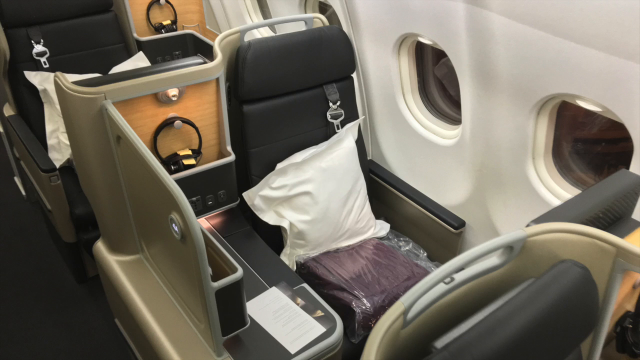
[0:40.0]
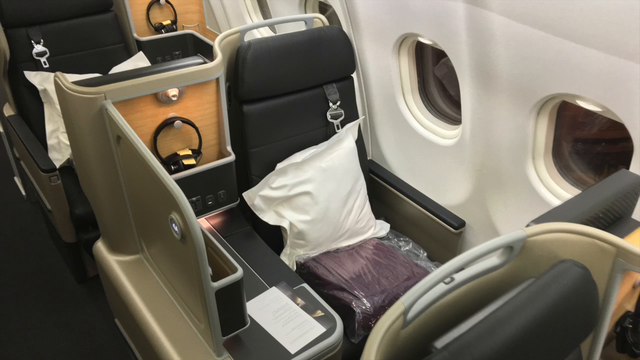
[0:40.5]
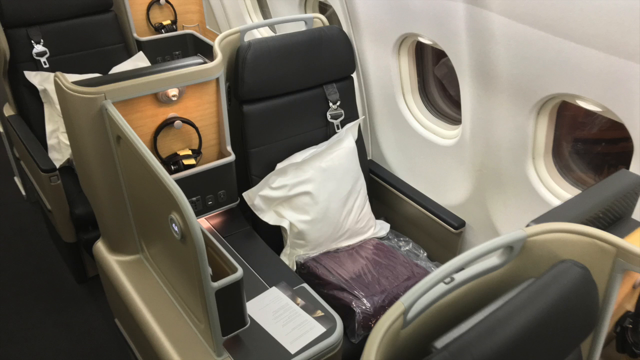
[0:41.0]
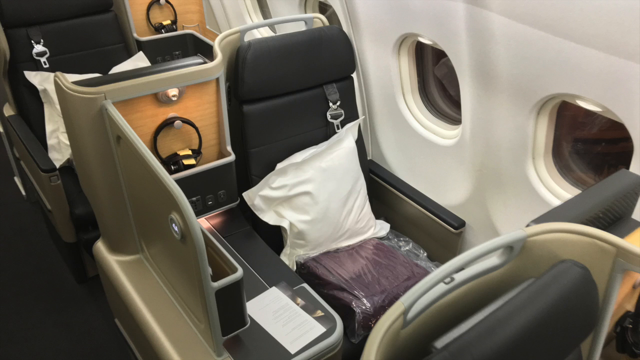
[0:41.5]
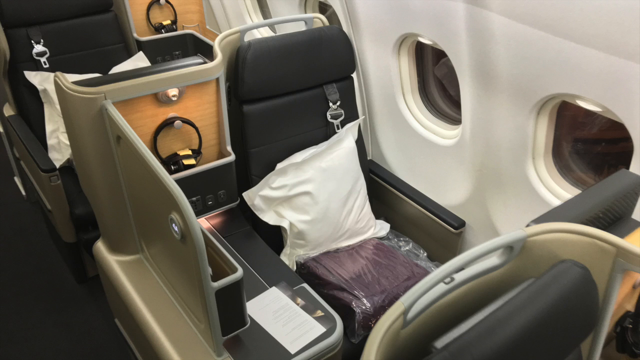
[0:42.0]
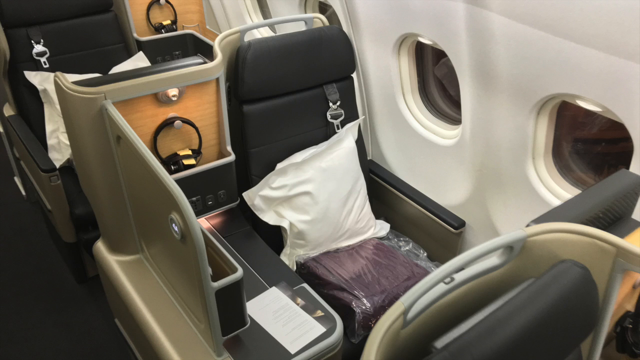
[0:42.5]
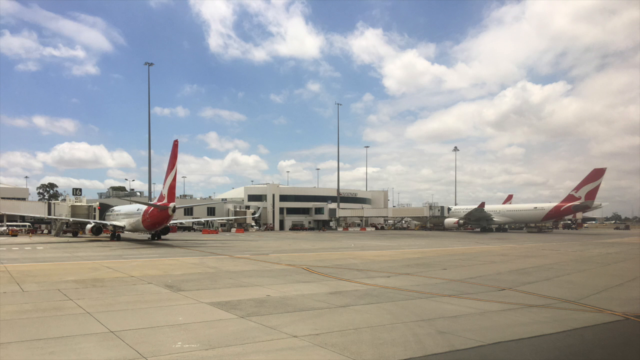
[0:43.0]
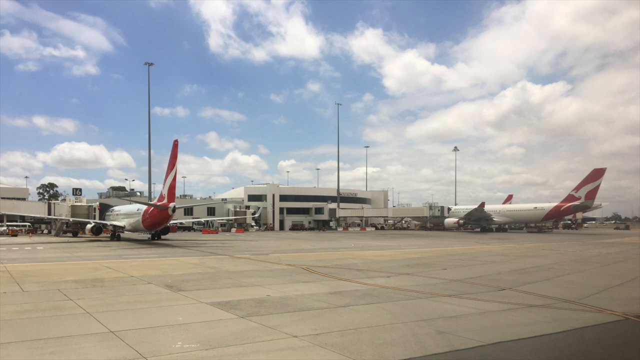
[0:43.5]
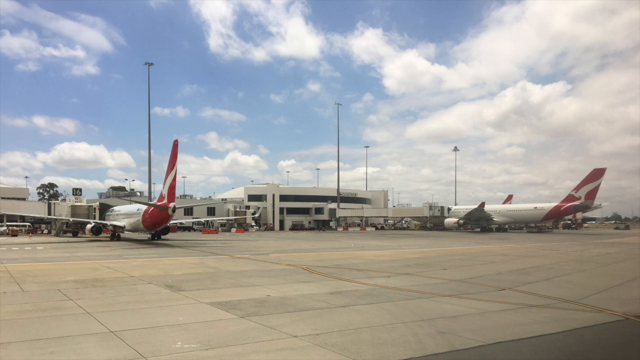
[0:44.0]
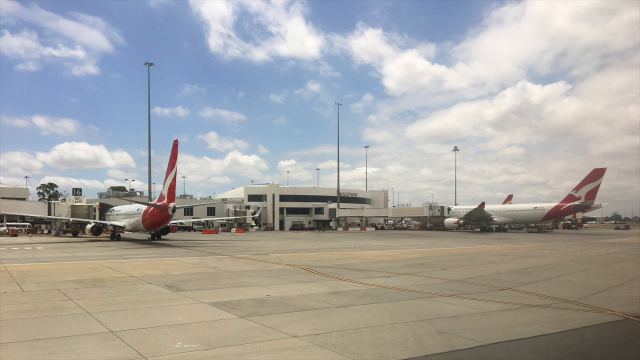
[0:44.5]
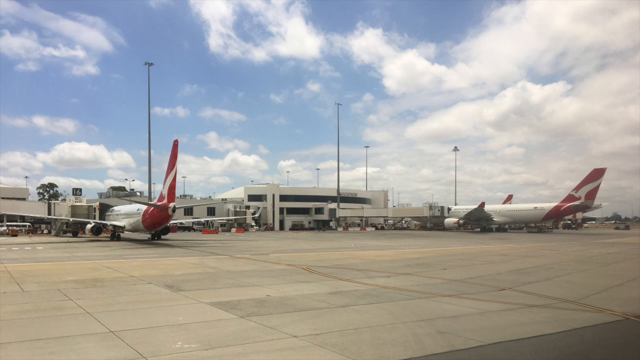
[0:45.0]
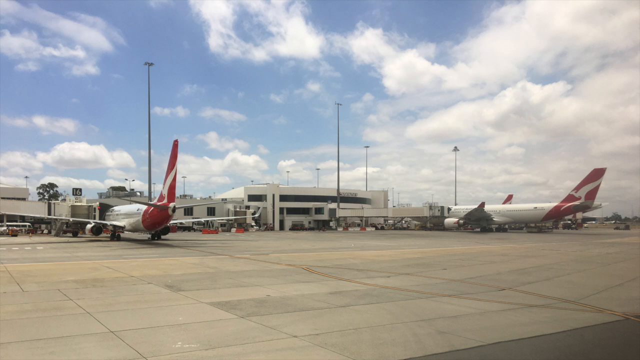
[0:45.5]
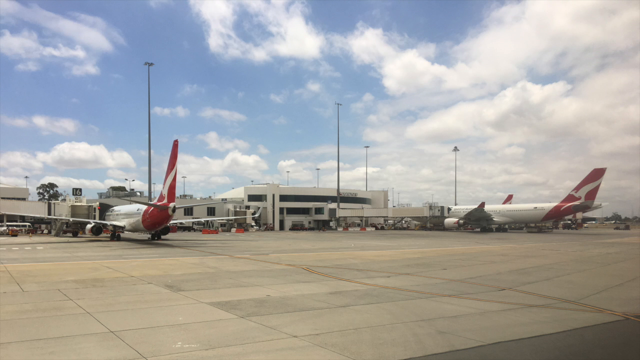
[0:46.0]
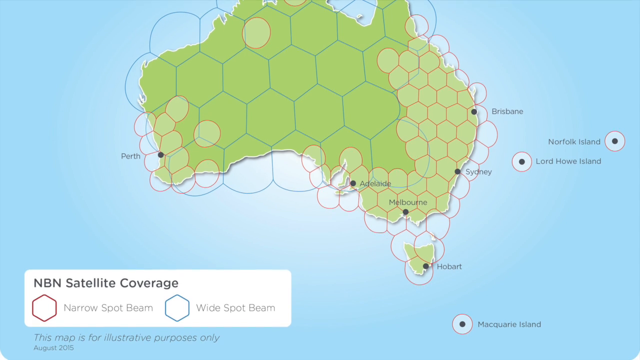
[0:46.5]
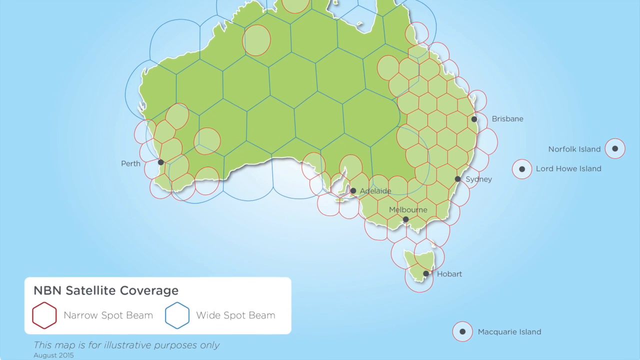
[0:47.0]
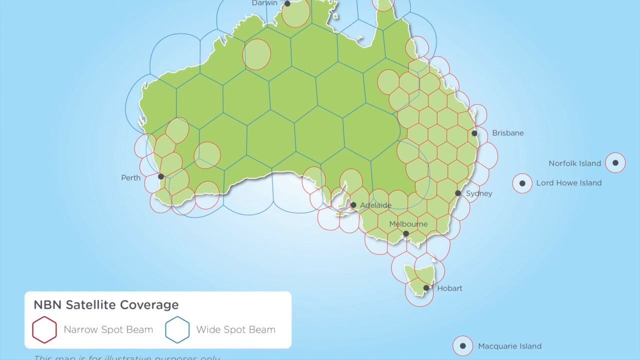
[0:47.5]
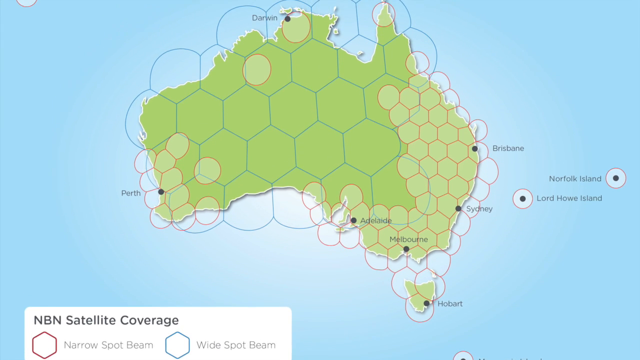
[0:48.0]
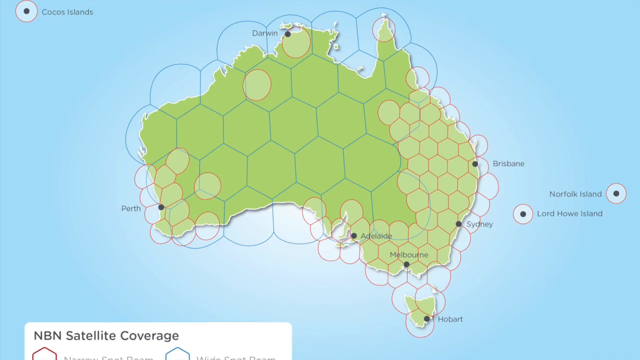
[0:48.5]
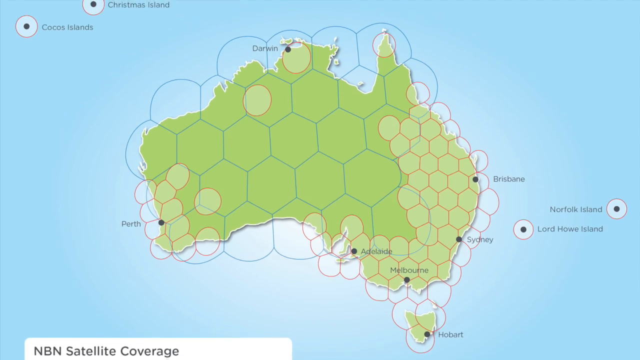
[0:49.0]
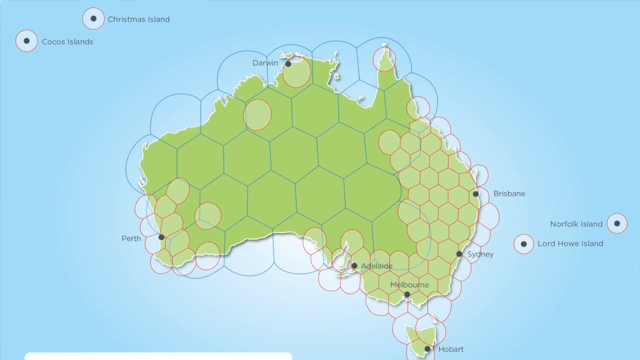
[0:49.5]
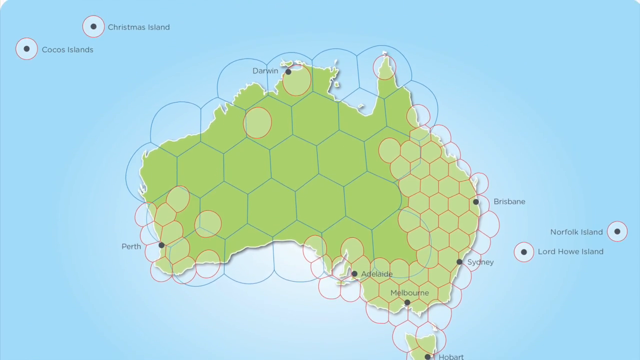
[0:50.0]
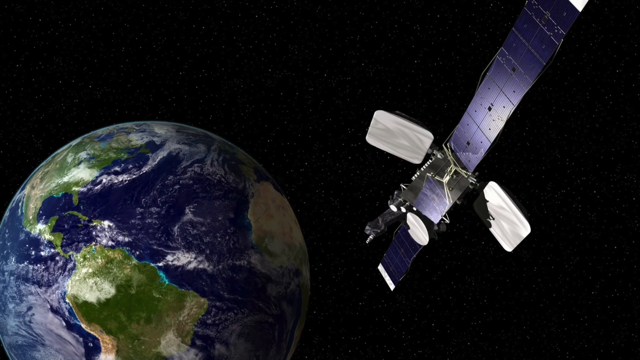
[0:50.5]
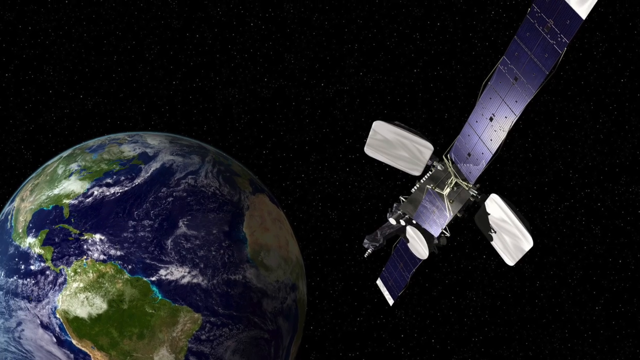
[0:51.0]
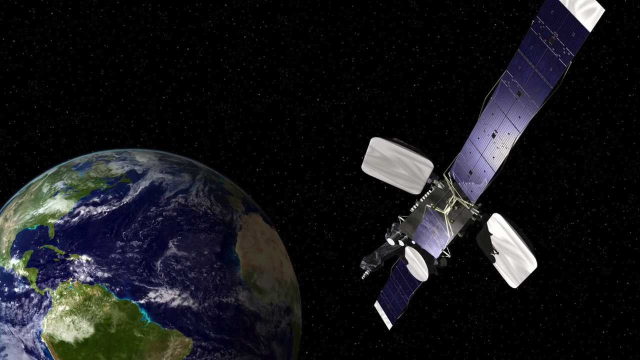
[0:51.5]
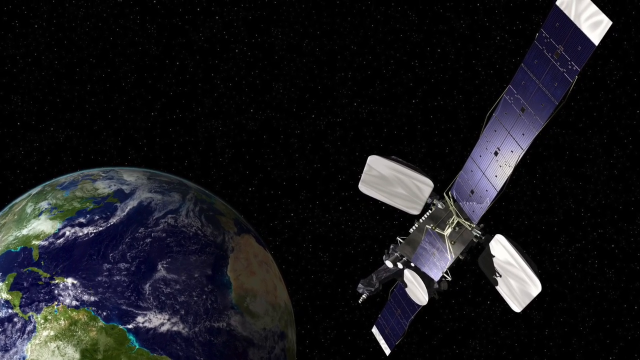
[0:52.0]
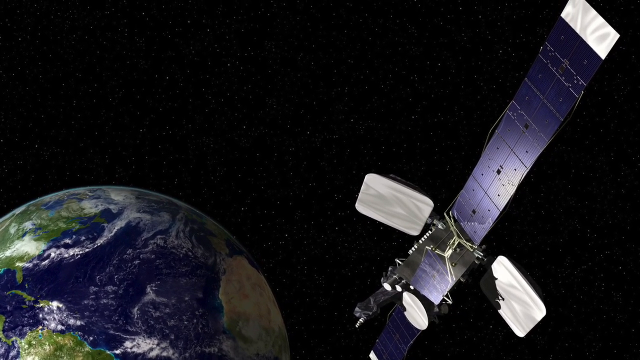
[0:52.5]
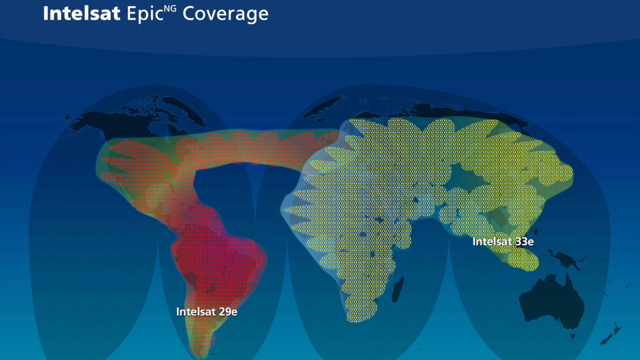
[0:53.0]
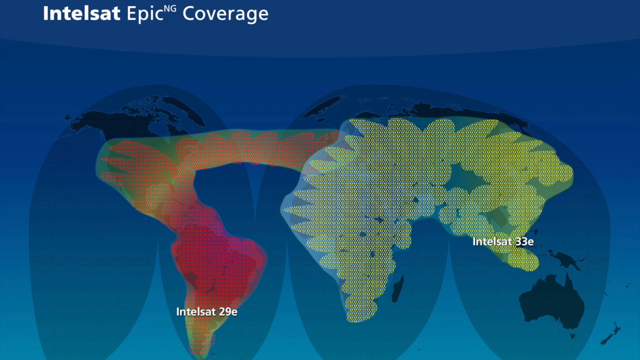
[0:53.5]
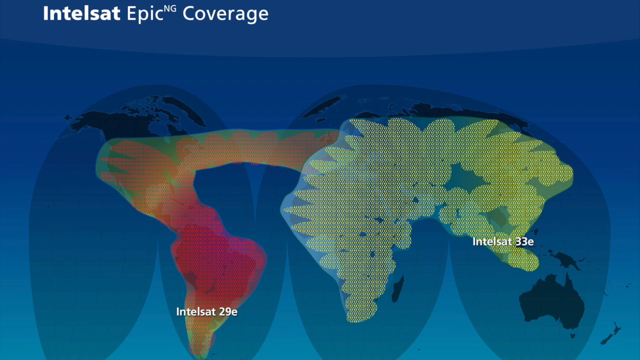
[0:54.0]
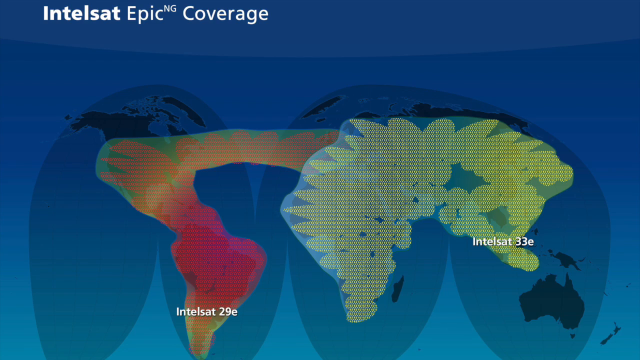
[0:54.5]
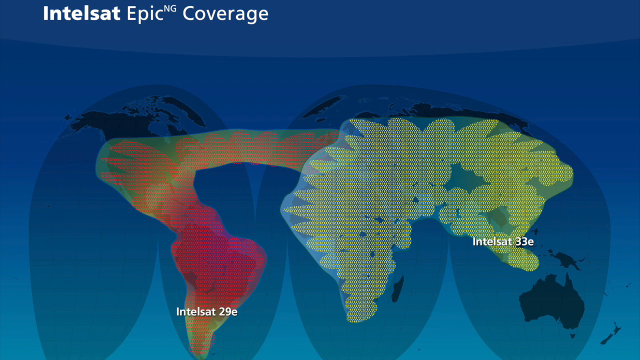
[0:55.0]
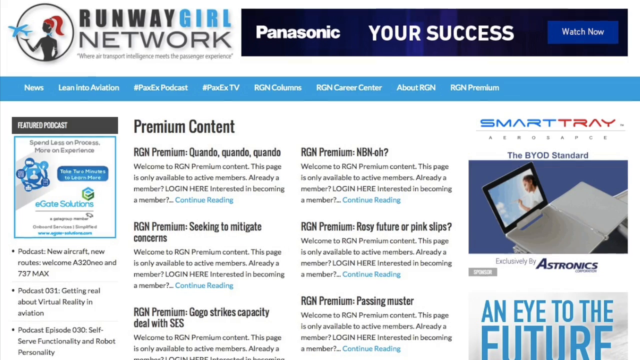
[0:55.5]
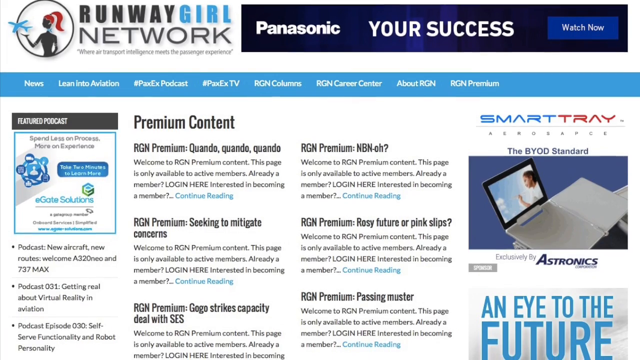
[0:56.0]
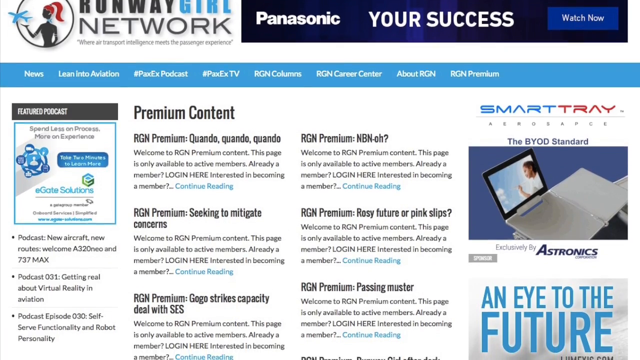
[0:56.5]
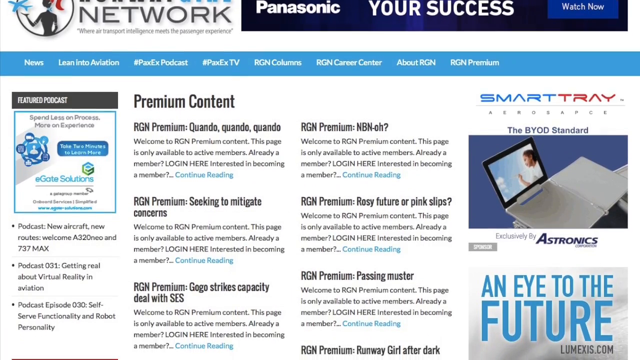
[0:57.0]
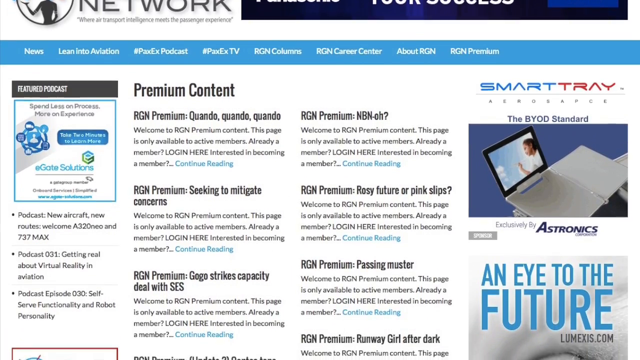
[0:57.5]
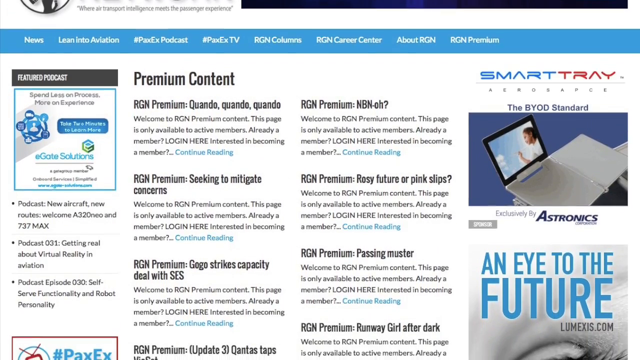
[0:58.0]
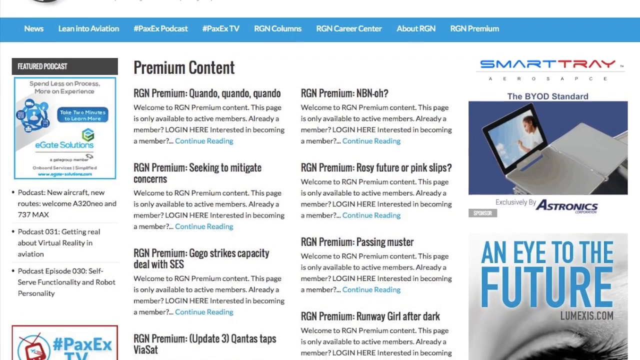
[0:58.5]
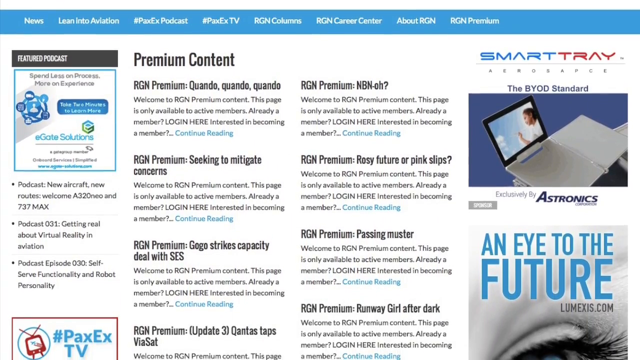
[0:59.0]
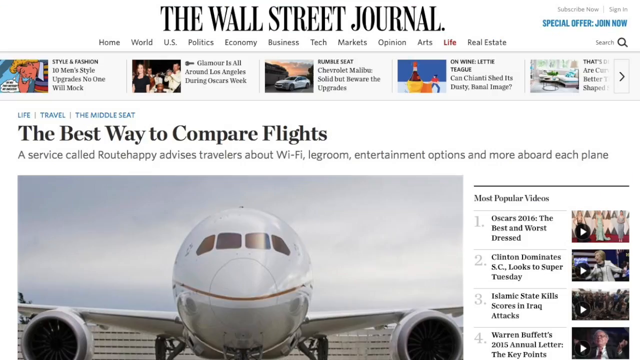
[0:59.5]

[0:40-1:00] The sitting area inside the airplane is still shown before a cut to the runway outside, where two airplanes are parked with a building behind them. Next comes a diagram of the NBN and satellite coverage: a map of Australia with information on it explained by a key legend in the bottom left of the picture. The camera pans upward on the map before cutting to an image of Earth and a satellite floating in space, and the camera pans up on this image as well. It then cuts to an all-blue image of the intel sat epic coverage showing information on that category. The video returns to the Runway girlNetwork website, where premium content is shown, with different titles on the web page as it scrolls downward. For a brief second at the very end, a Wall Street Journal article about the best way to compare flights appears.